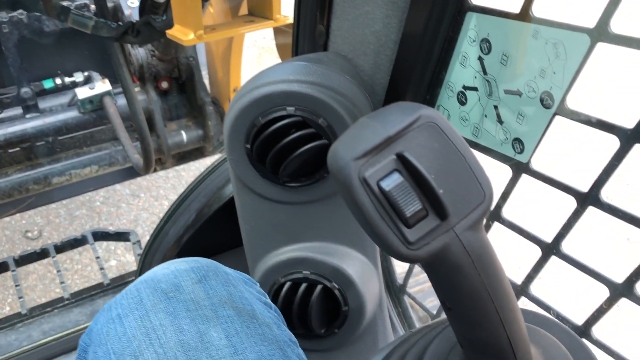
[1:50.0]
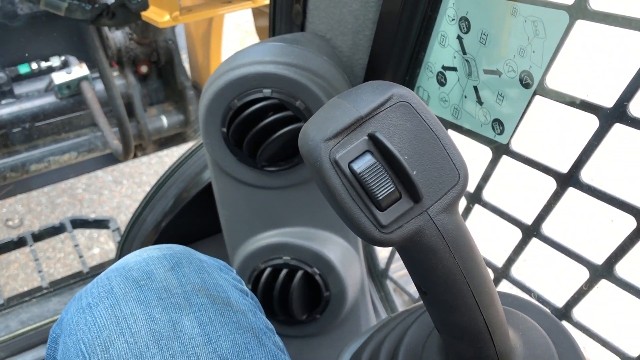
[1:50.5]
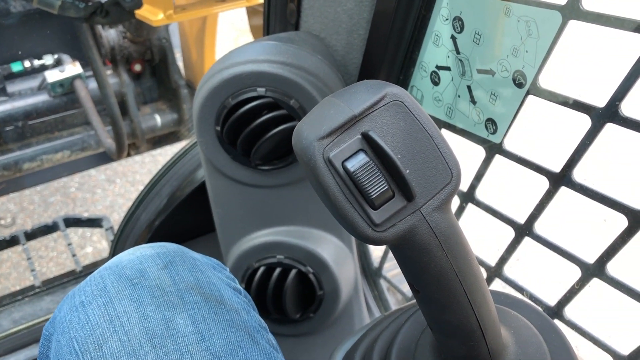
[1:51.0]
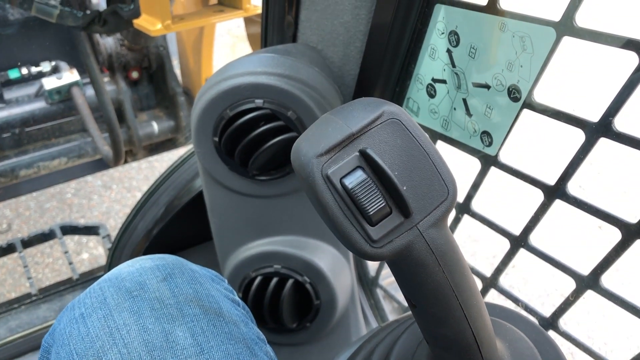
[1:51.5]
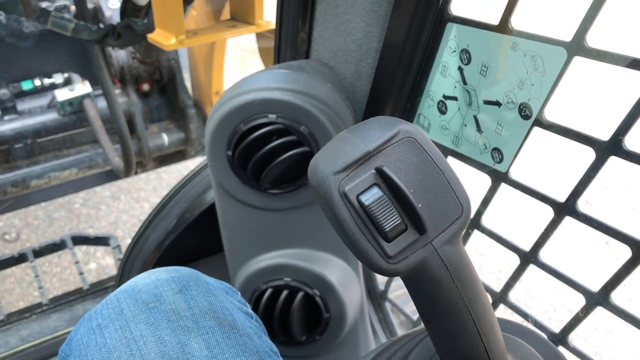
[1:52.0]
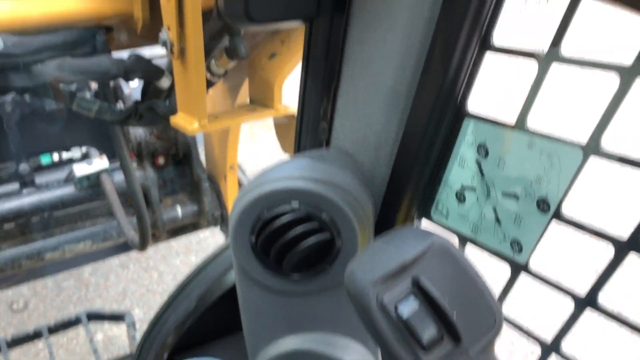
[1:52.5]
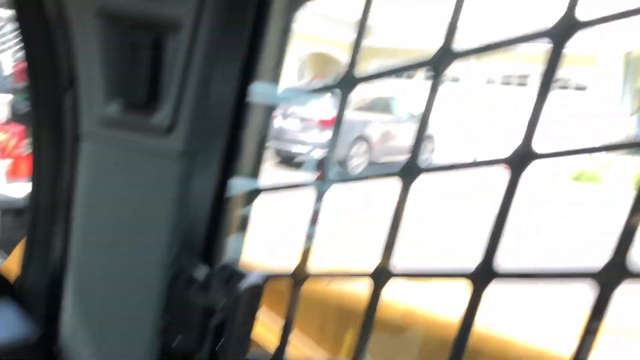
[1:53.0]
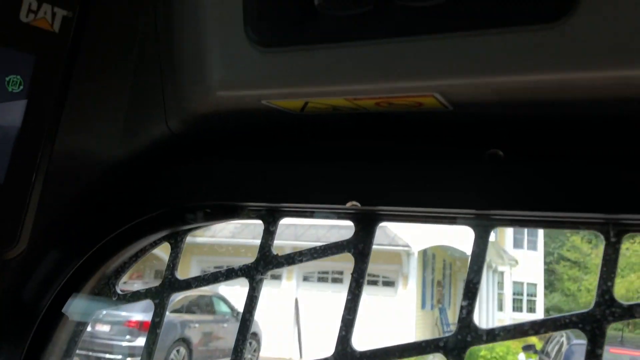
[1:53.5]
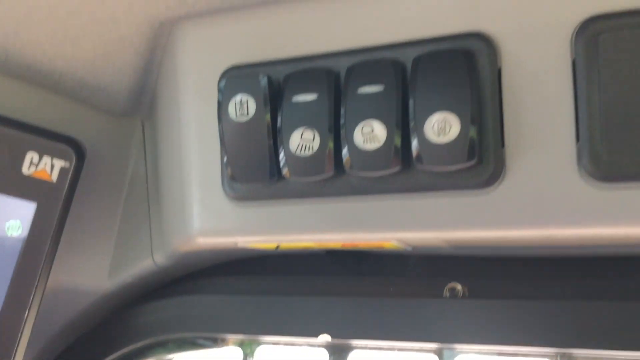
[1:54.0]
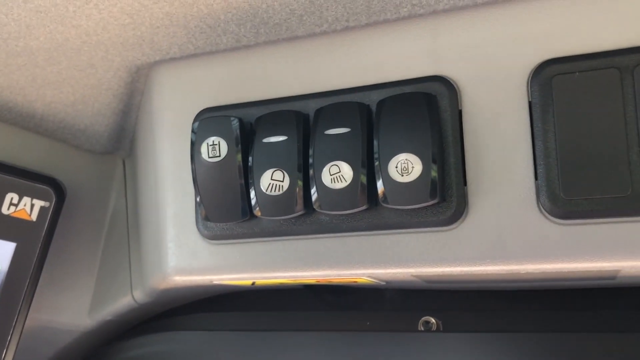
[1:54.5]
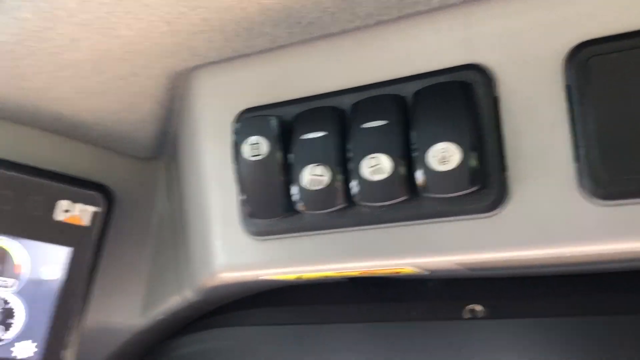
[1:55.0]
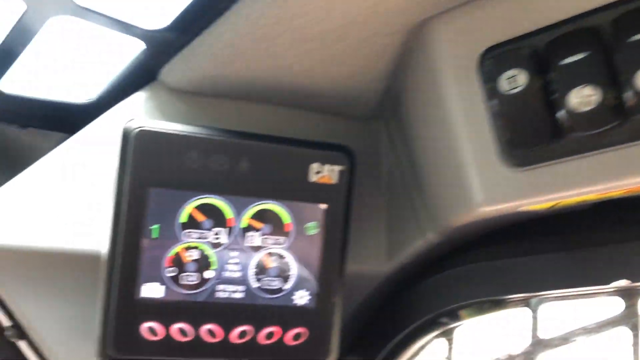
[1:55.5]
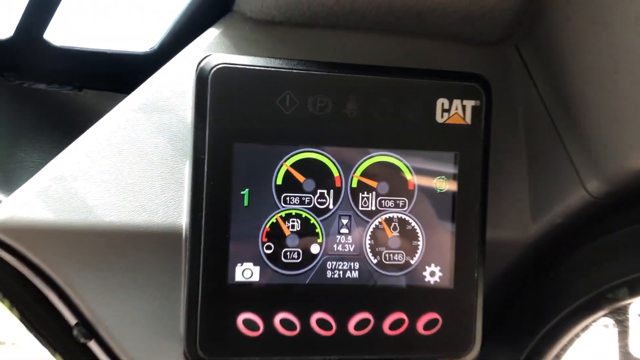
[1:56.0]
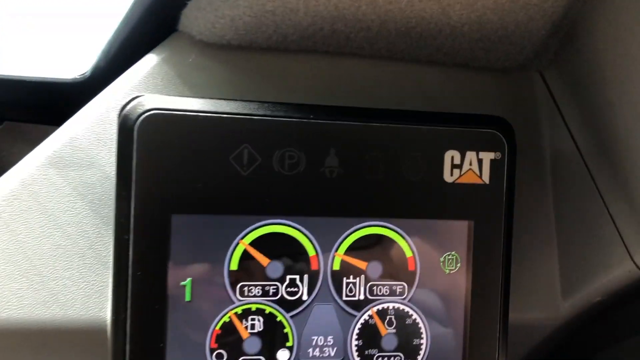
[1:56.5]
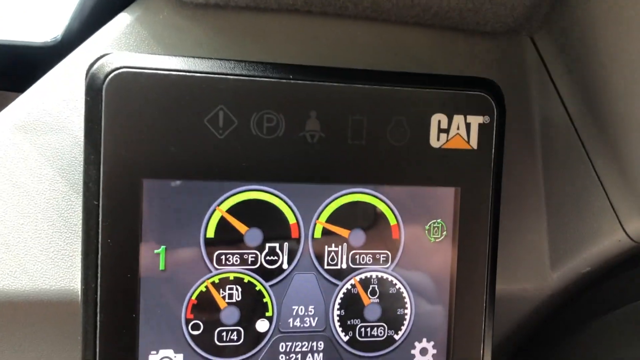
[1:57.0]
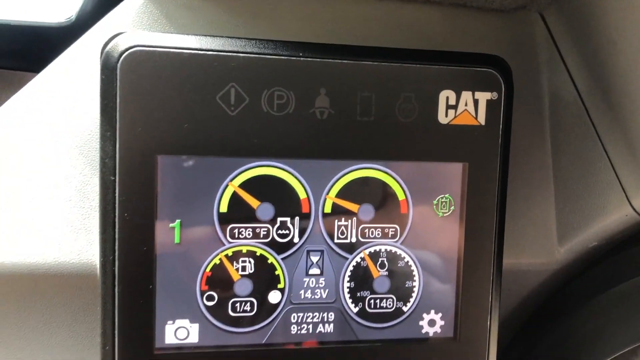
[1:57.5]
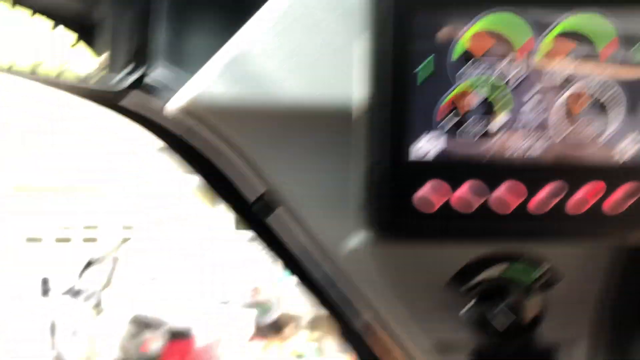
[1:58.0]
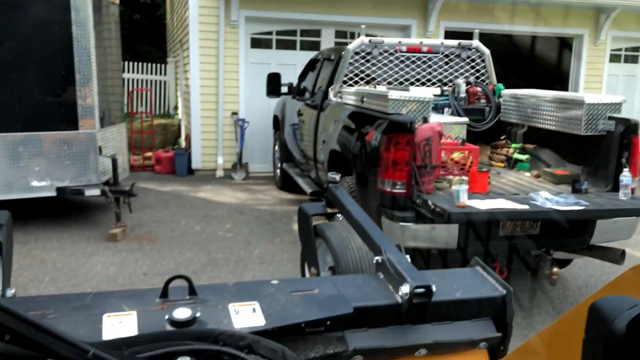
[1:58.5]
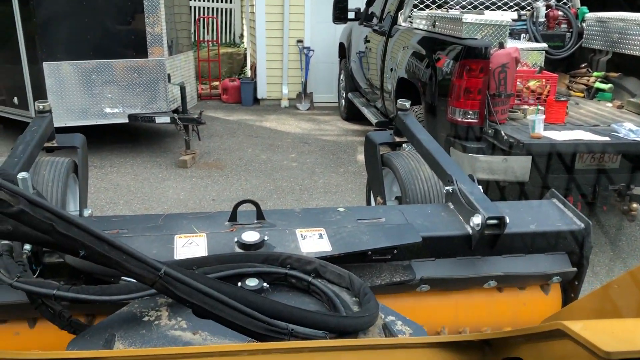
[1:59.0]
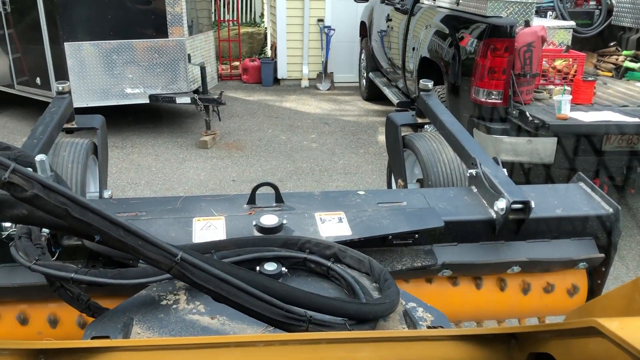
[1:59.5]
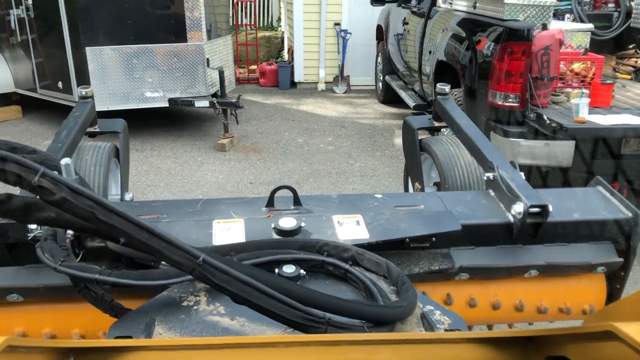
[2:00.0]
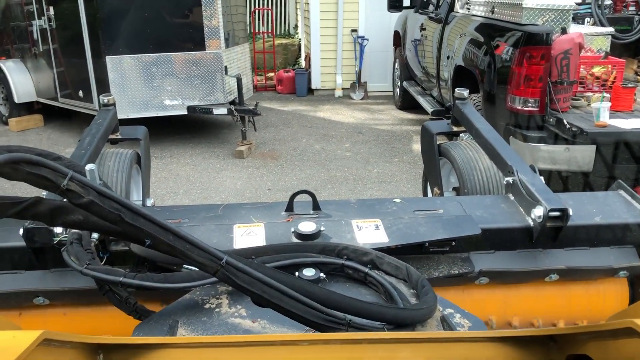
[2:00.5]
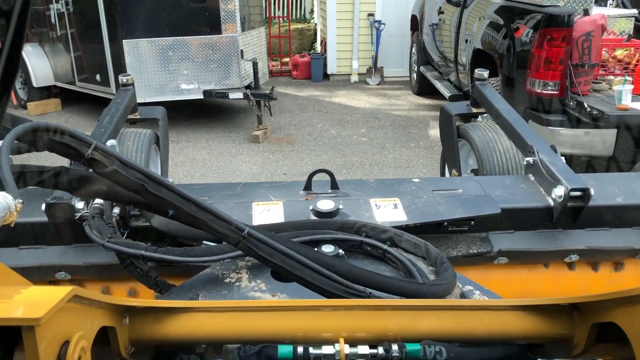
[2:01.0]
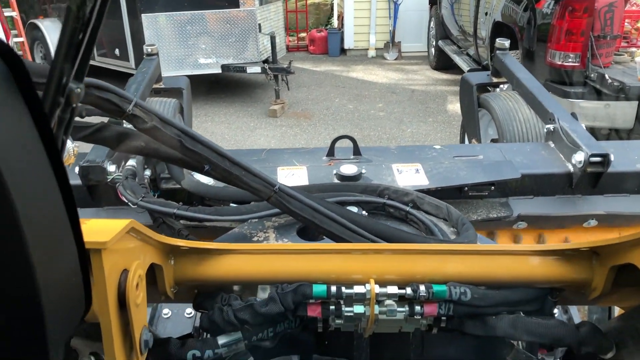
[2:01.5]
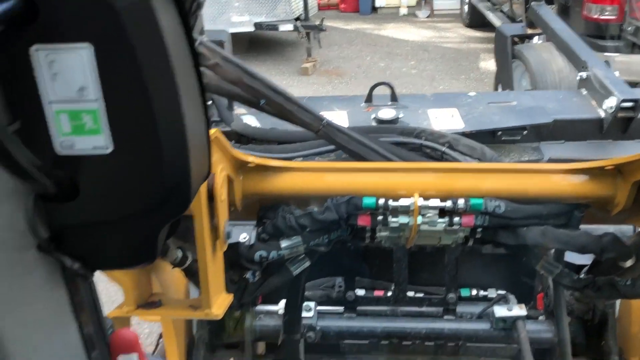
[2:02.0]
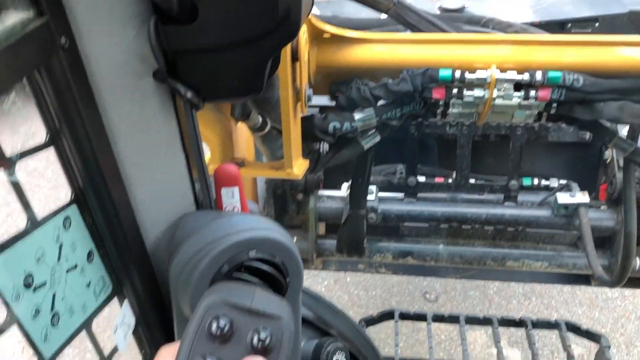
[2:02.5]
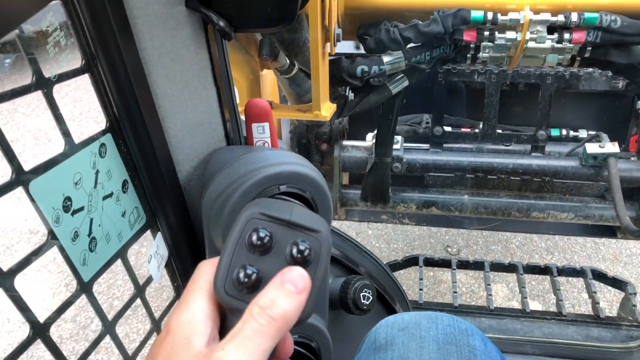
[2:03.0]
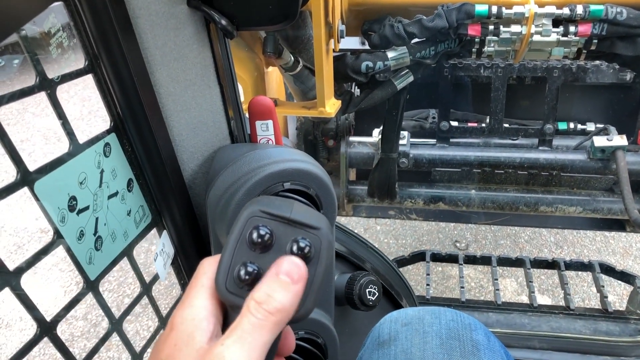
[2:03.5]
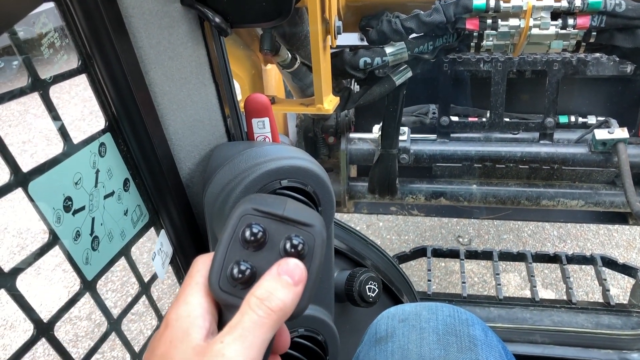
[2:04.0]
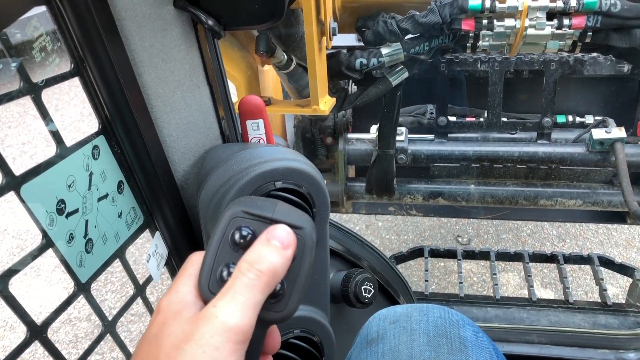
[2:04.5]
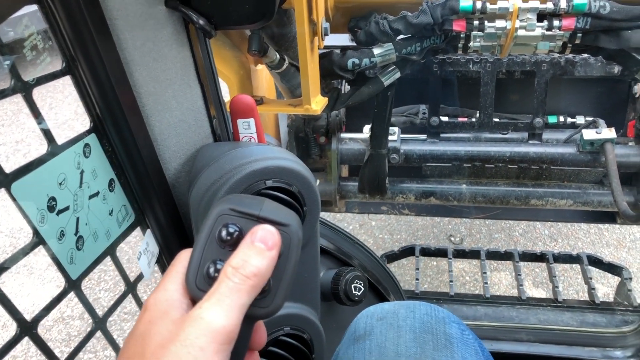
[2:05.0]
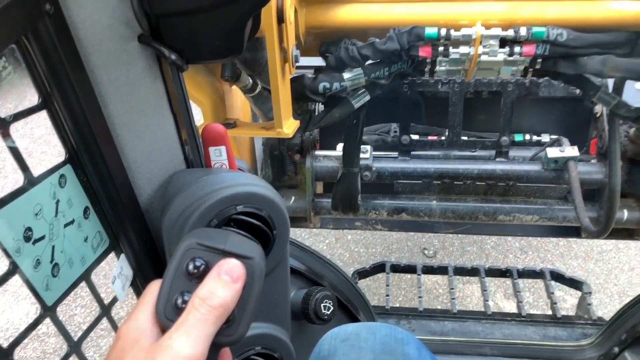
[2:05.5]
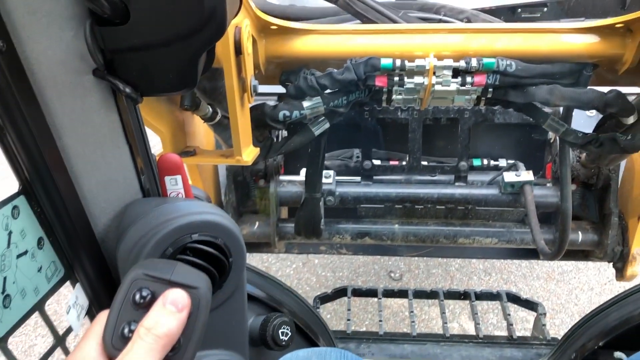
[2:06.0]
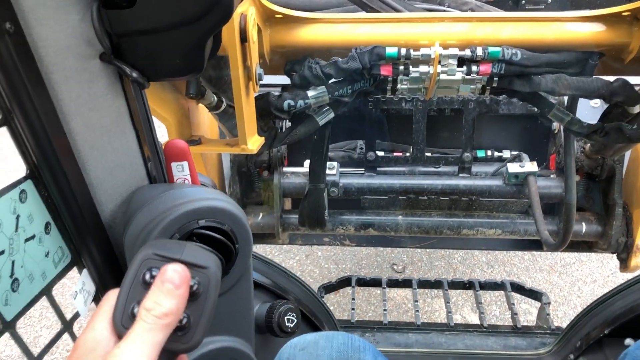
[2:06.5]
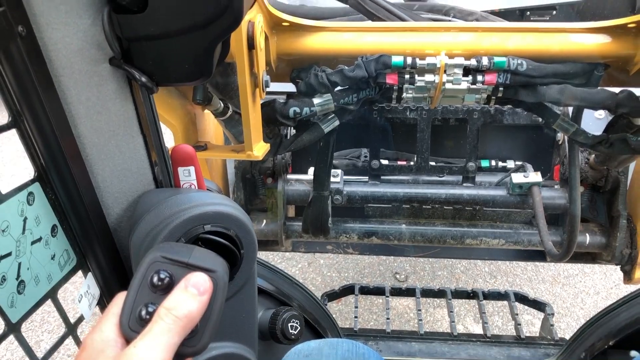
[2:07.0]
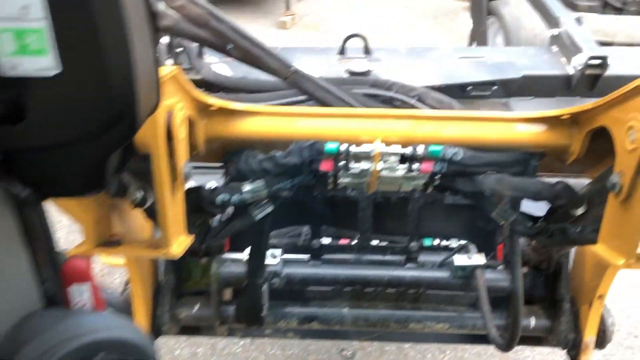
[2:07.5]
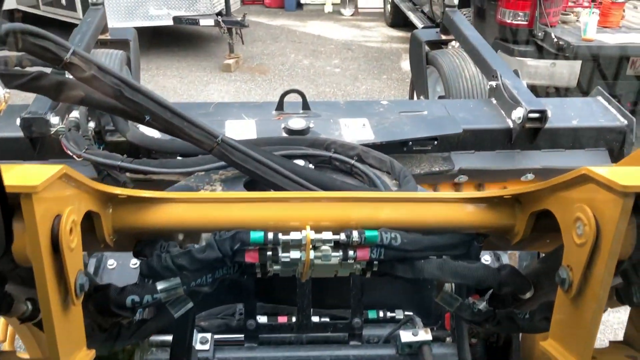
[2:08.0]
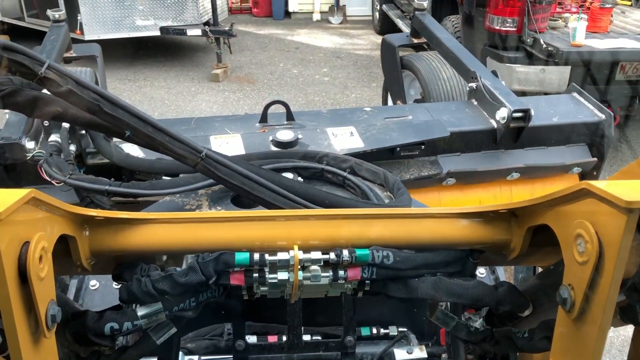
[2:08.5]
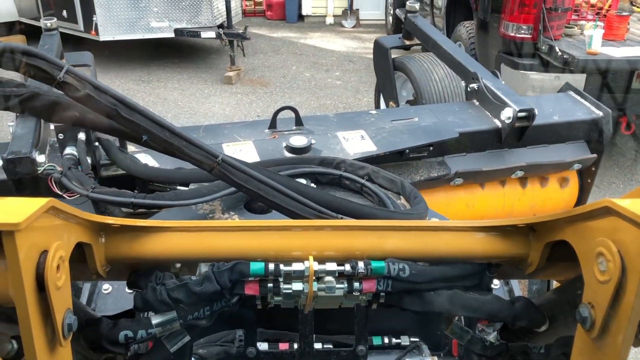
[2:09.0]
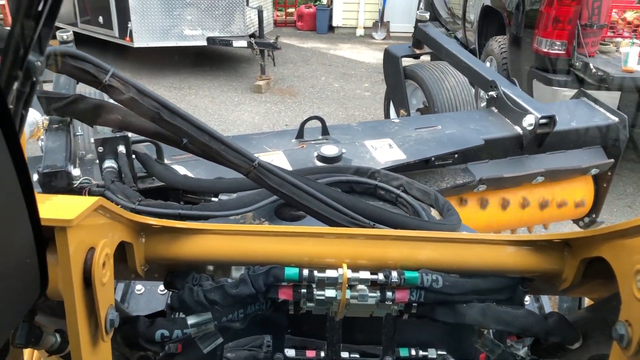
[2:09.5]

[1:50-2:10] A part that looks like the steering, looking like a gear, appears to drive the machine's movement. The camera zooms out and then into another section of the machine with a temperature control system that has four buttons. The machine is a caterpillar made by Cat, as shown on the wall, and another screen shows different things. Vehicles are parked in the garage while others use the control system to control the caterpillar's movement. The man looks like the driver, appears to know what he is doing, and seems to work at the machine repair workshop.